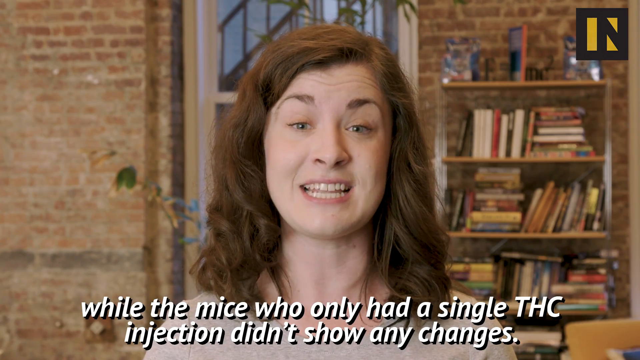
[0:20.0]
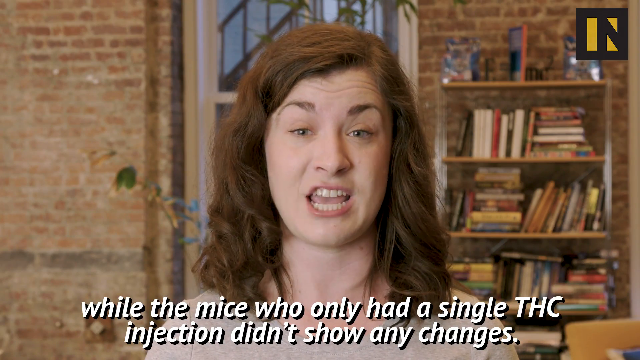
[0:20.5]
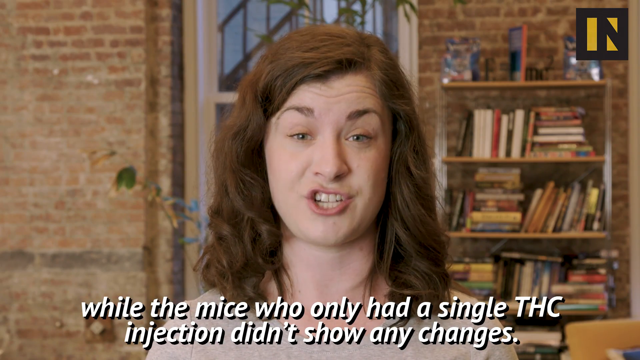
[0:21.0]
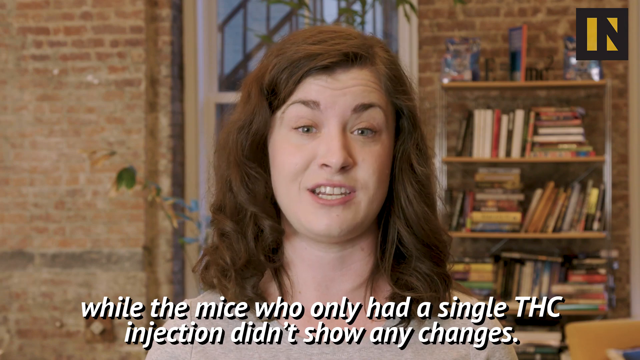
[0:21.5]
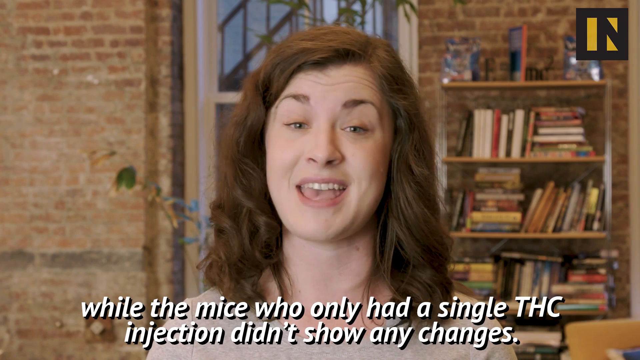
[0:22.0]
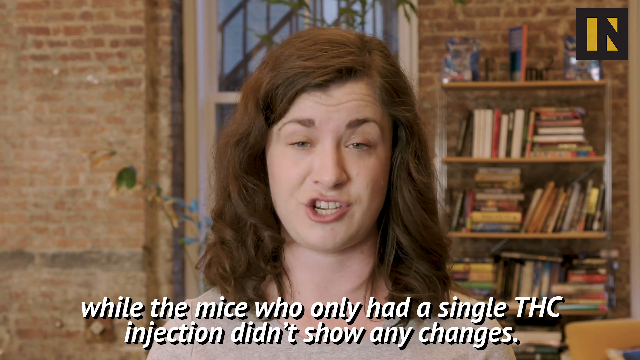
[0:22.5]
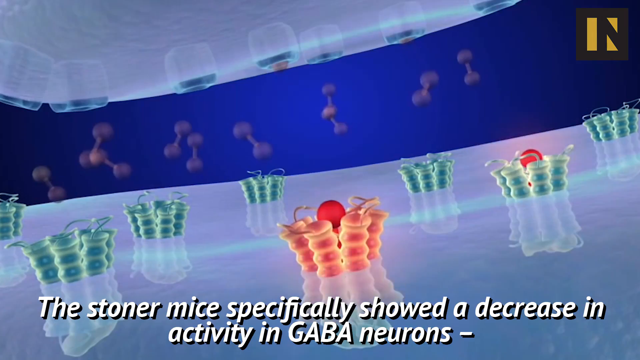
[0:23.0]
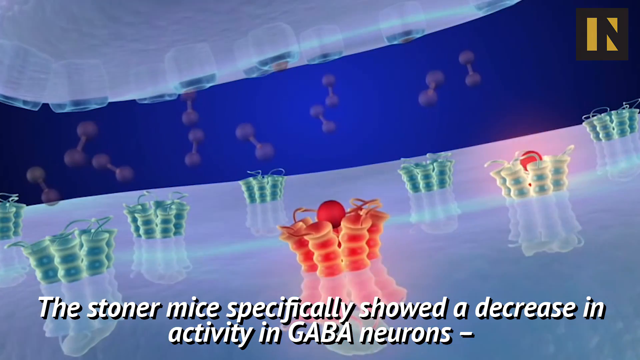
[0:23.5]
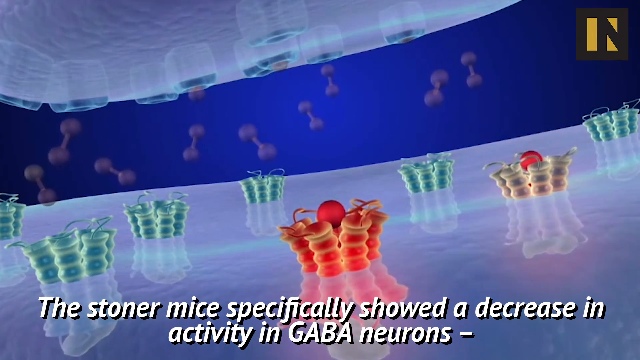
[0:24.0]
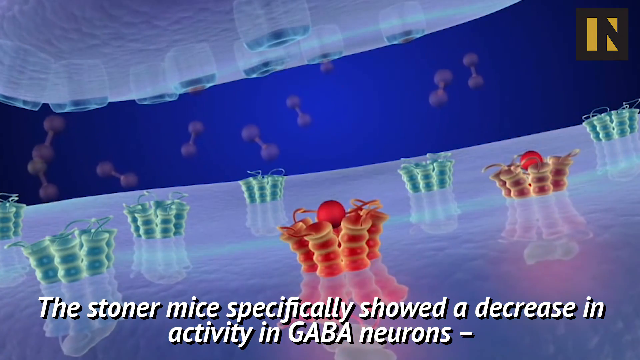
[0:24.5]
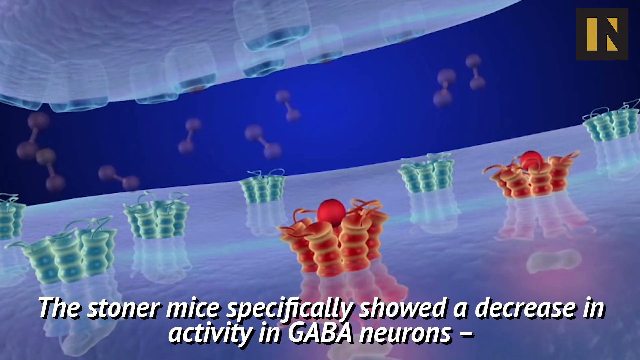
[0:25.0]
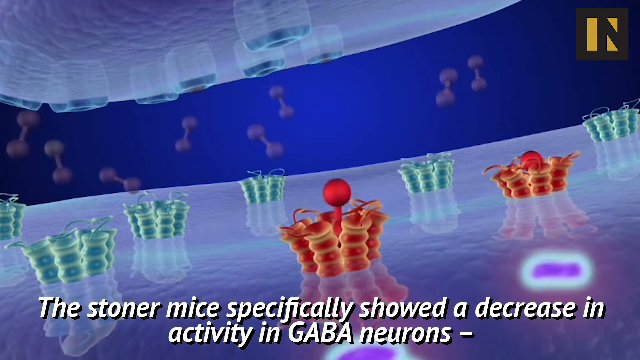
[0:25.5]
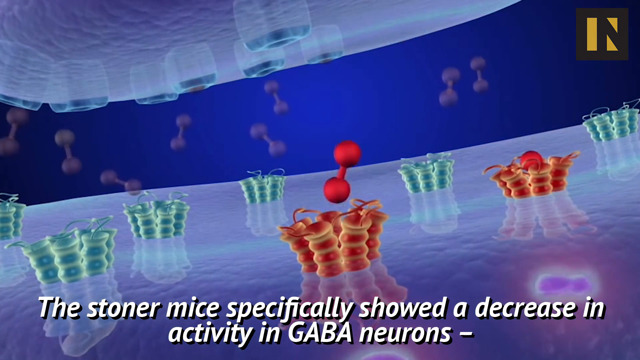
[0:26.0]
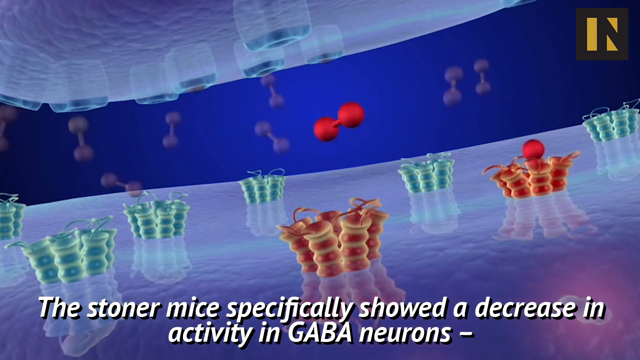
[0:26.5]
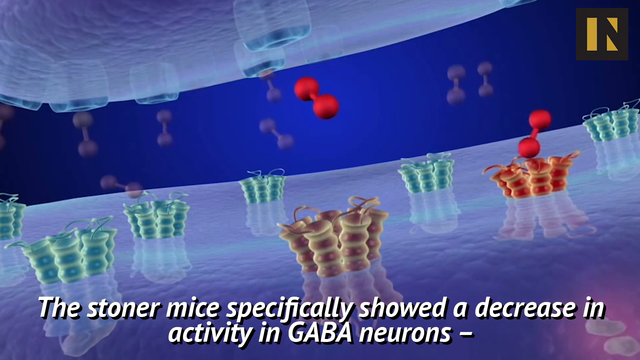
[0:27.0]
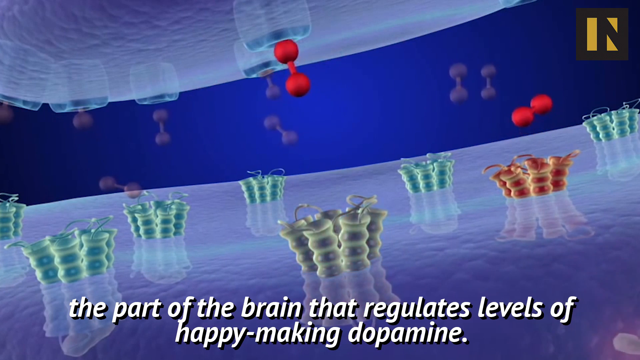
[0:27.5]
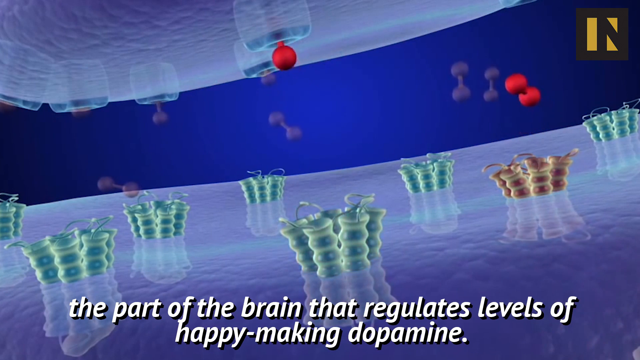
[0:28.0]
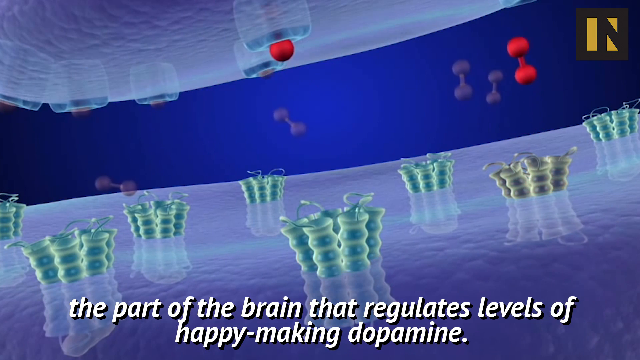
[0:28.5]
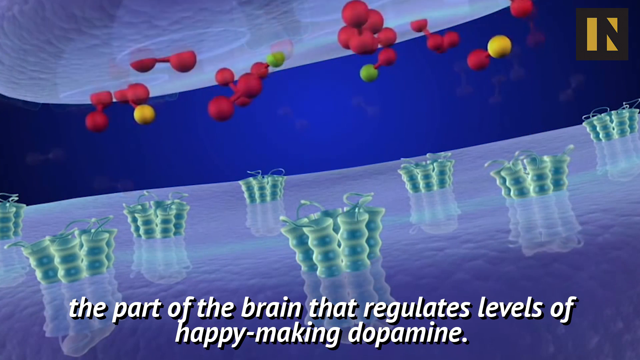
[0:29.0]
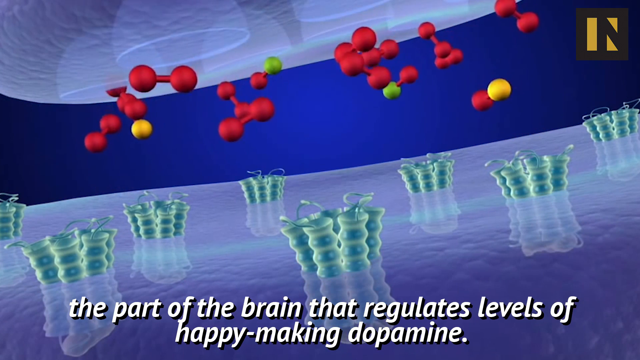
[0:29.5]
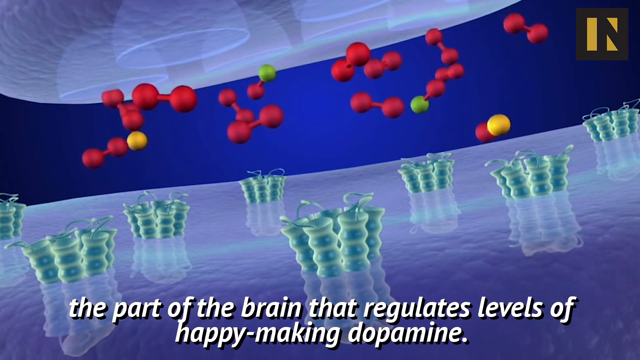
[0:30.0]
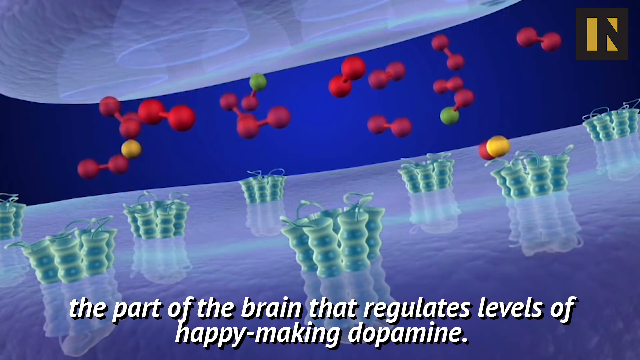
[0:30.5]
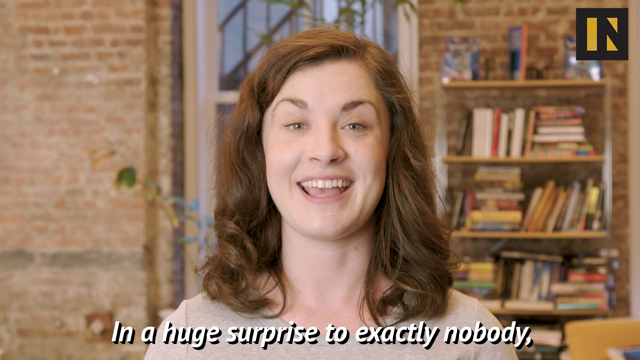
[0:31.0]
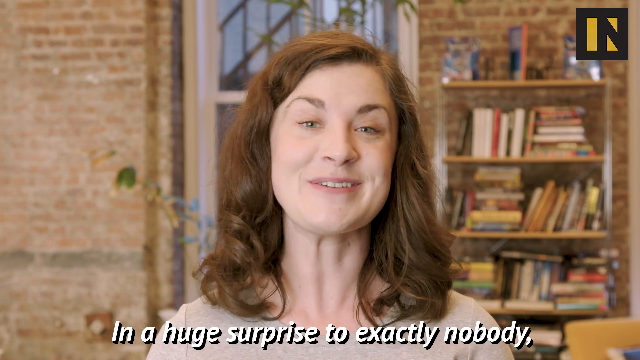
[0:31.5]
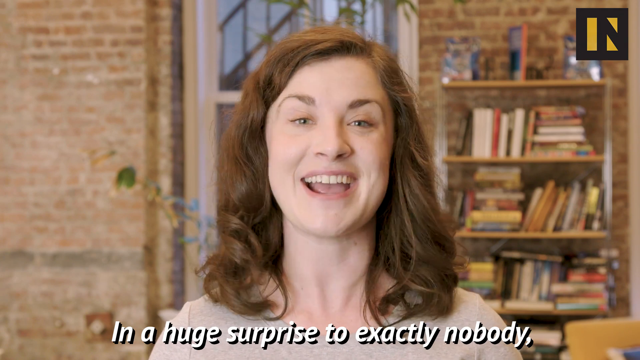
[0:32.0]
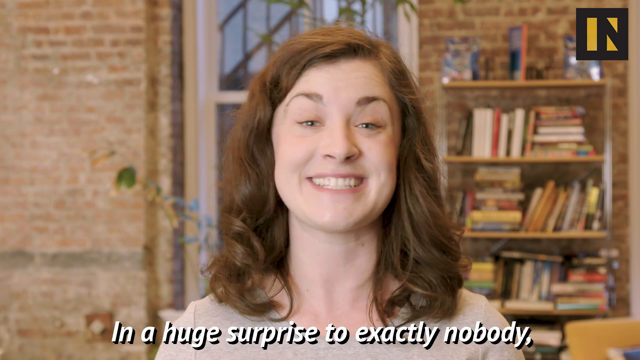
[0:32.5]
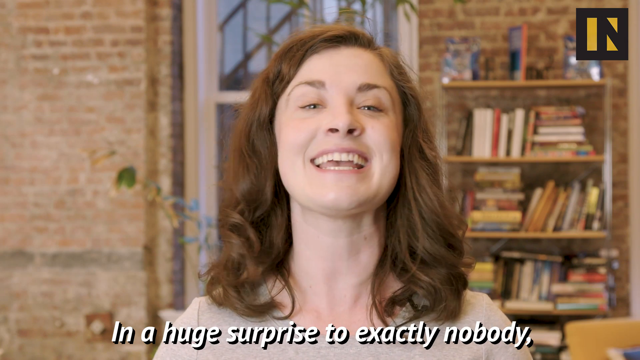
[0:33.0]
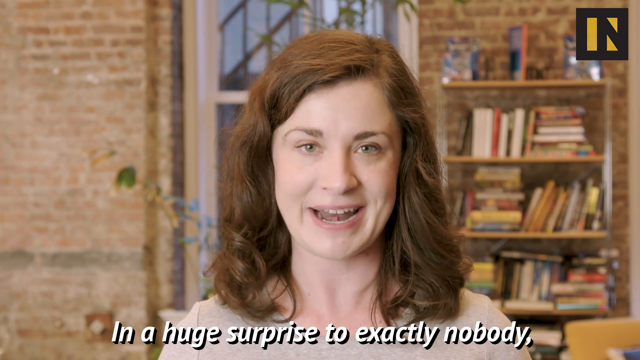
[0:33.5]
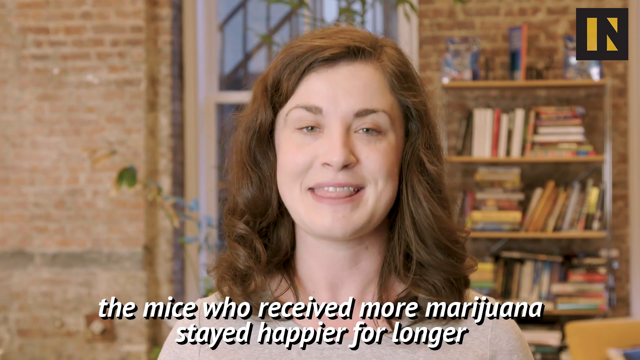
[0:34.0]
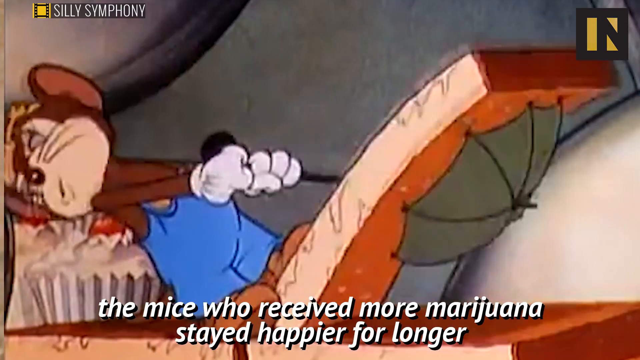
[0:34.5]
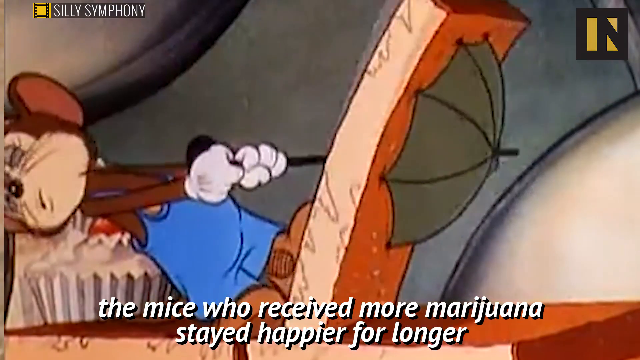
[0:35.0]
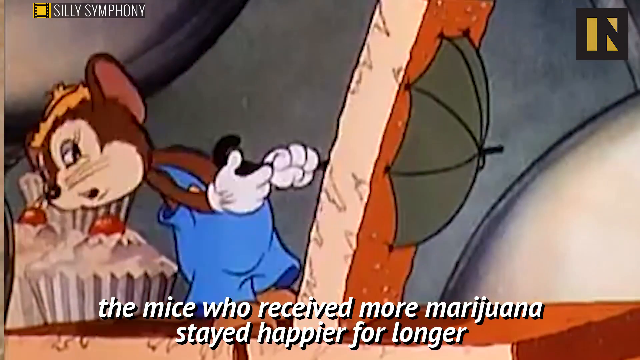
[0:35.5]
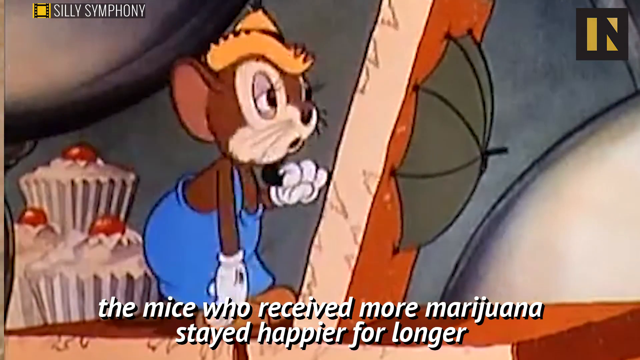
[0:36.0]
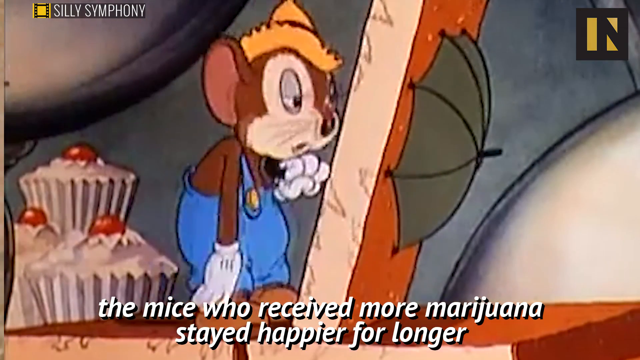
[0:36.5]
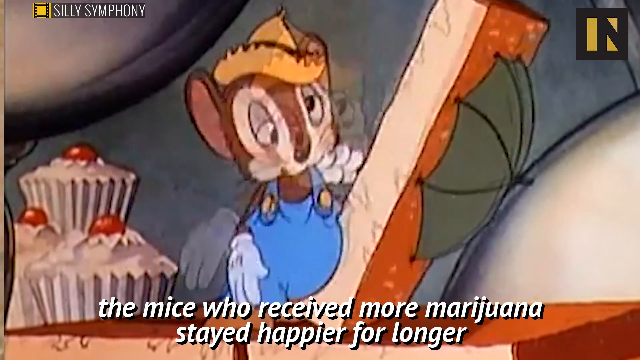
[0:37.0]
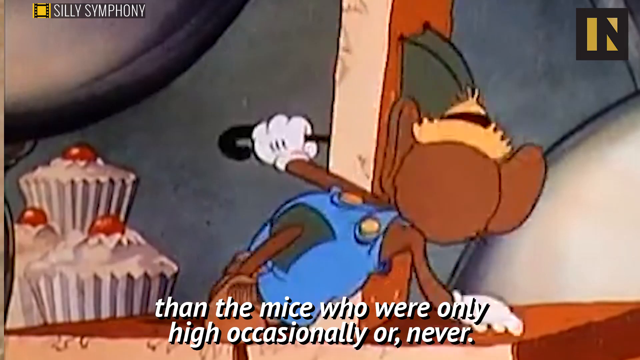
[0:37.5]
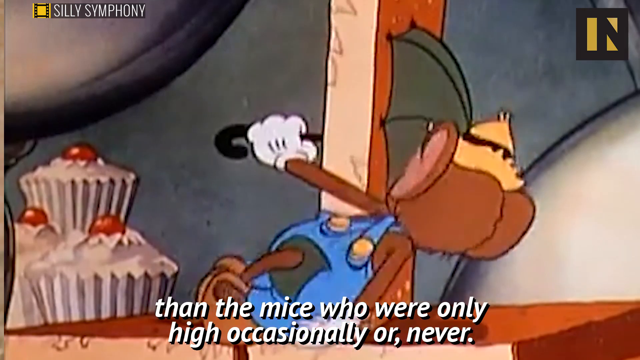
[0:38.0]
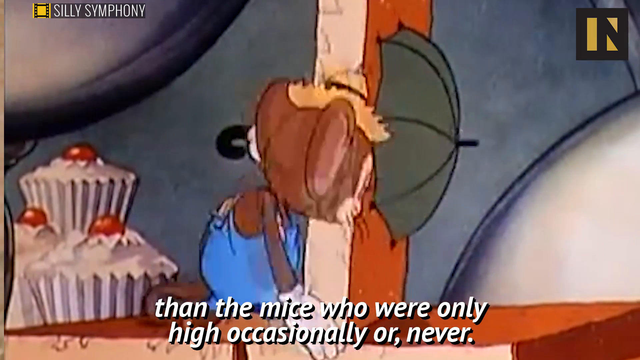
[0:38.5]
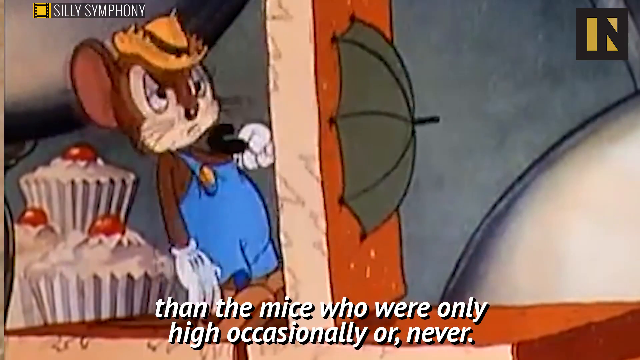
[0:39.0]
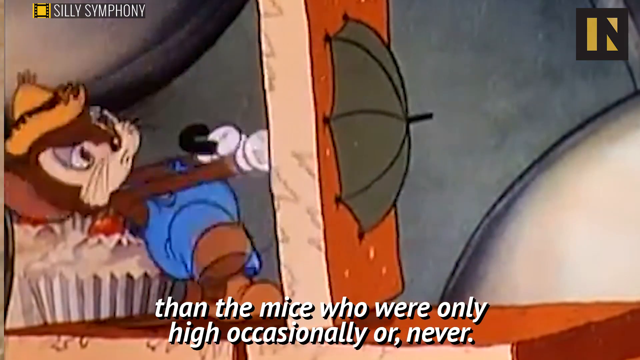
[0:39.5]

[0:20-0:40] The host faces the camera, with a plant on the right-hand side and a brick-covered wall behind it. Subtitles underneath read "well, the mice only had a single THC injection, didn't show any changes." A graphic of cells appears. Subtitles then read "the stoner mice specifically showed a decrease in activity in GARA neurons" while a graphic of neurons is in the background, with neurons moving along the middle of the graphic. The subtitles continue: "the part of the brain that regulates levels of happy making dopamine. In a huge surprise to exactly nobody." The video switches back to the host speaking directly at the camera, with subtitles reading "the mice who received more marijuana stayed happier for longer than mice who were only high occasionally or never." A cartoon then shows a mouse in overalls and a straw hat trying to pick up a piece of cake with an umbrella.